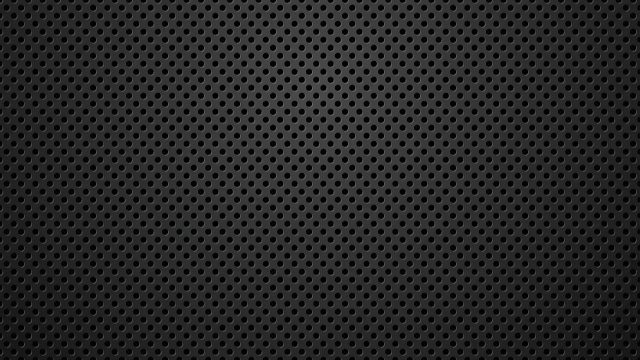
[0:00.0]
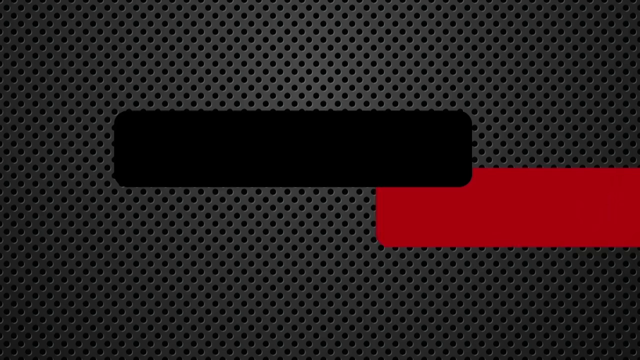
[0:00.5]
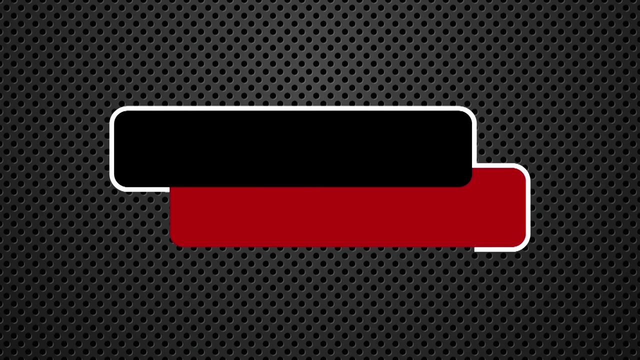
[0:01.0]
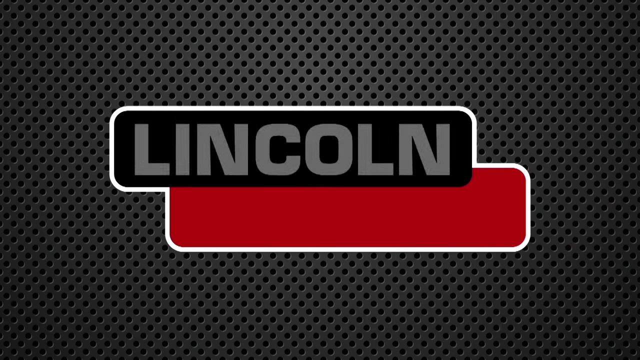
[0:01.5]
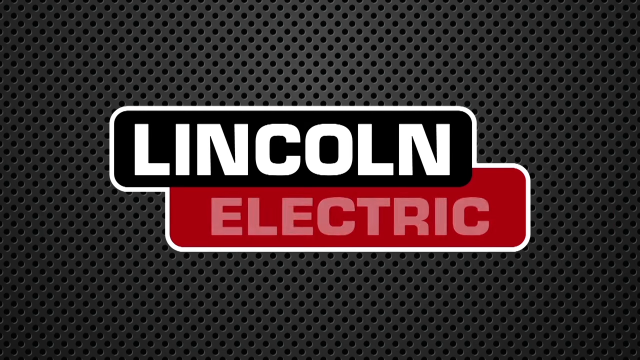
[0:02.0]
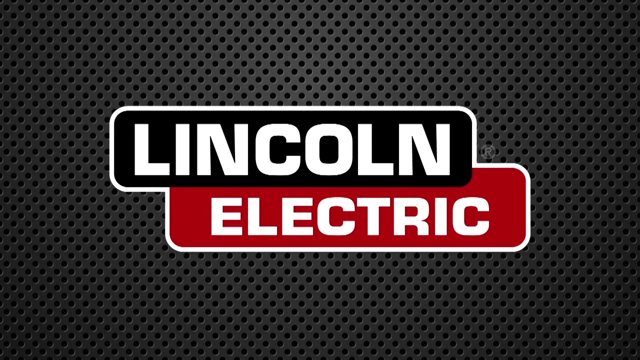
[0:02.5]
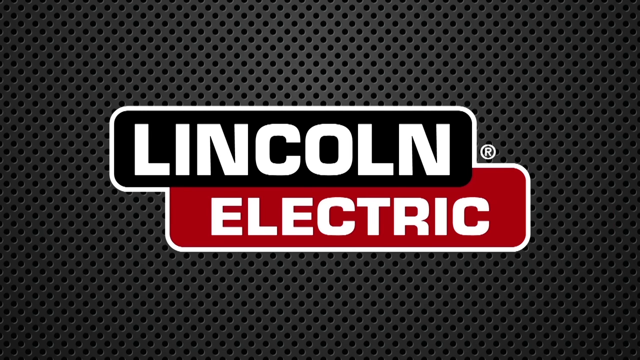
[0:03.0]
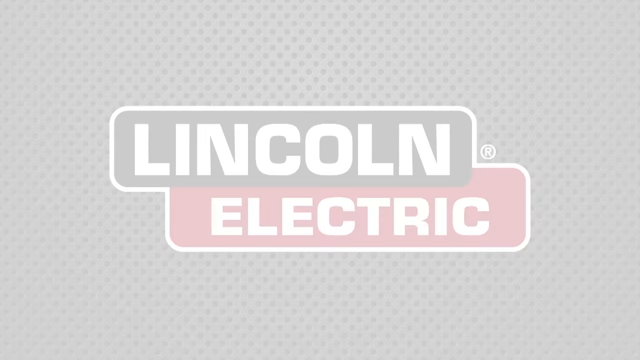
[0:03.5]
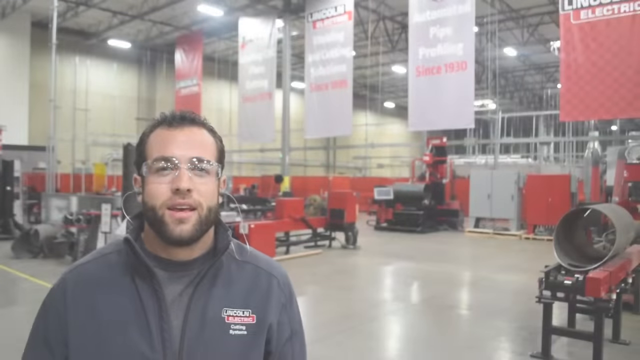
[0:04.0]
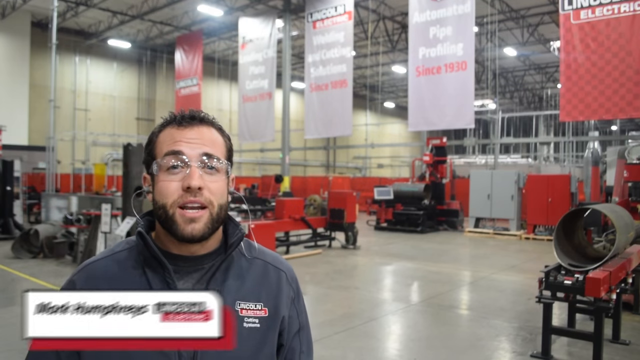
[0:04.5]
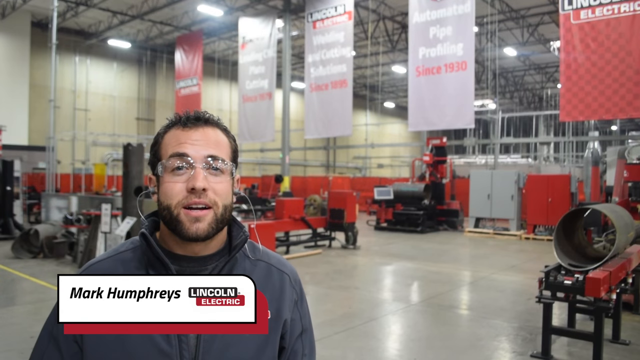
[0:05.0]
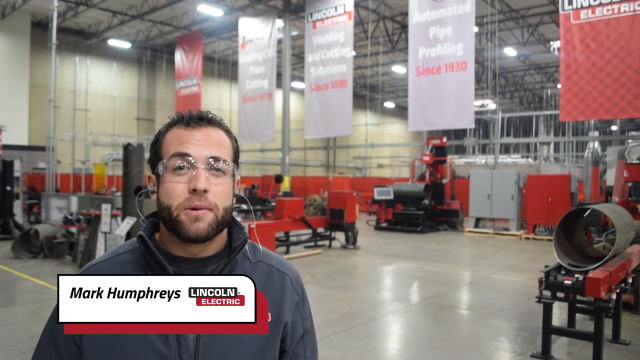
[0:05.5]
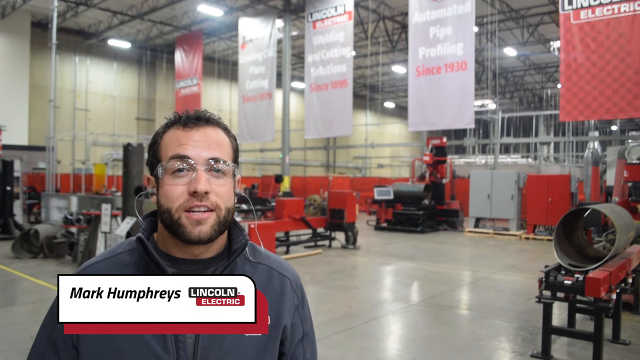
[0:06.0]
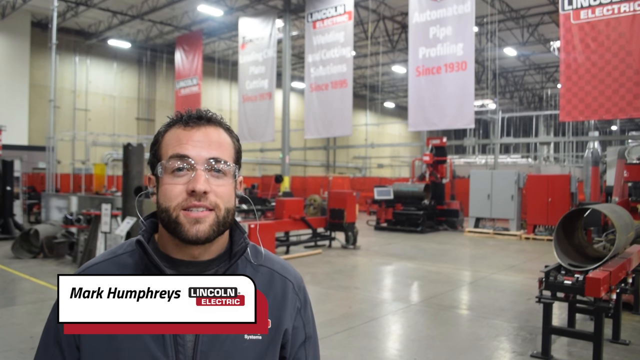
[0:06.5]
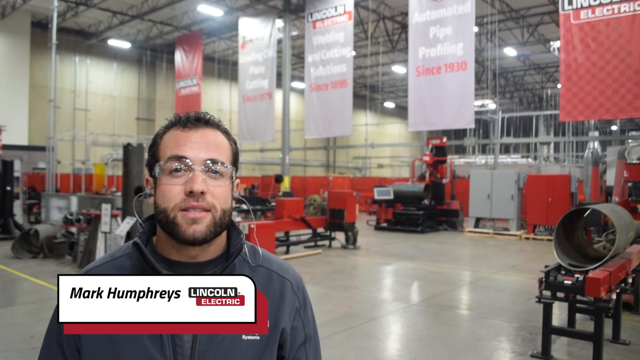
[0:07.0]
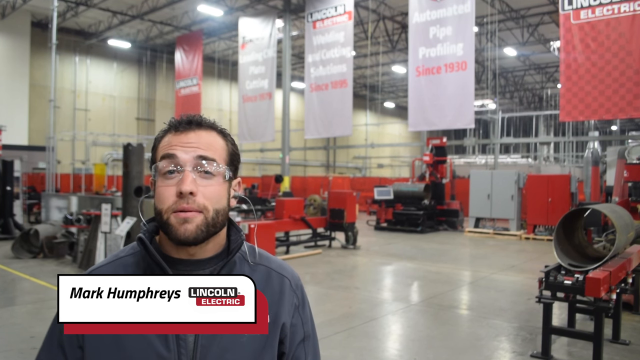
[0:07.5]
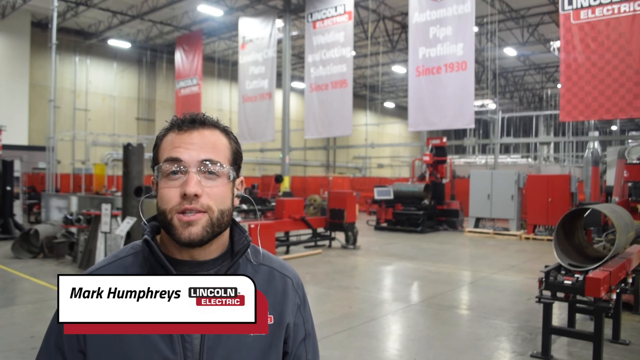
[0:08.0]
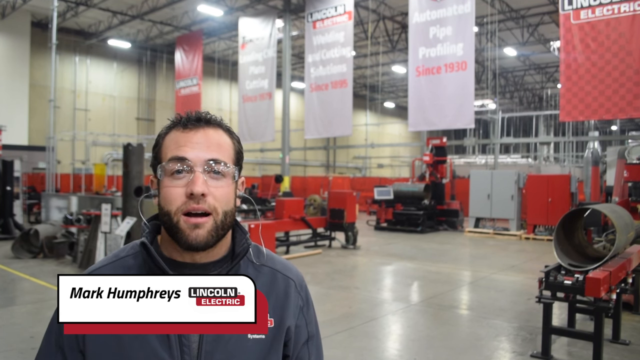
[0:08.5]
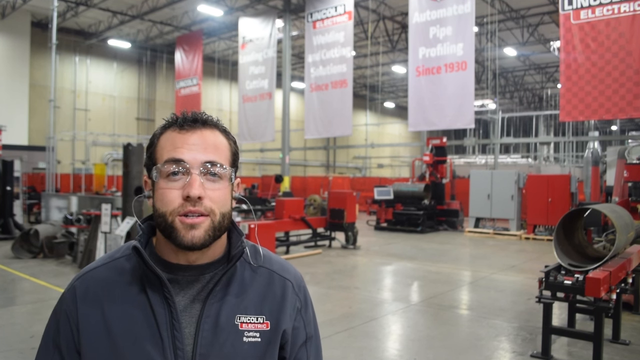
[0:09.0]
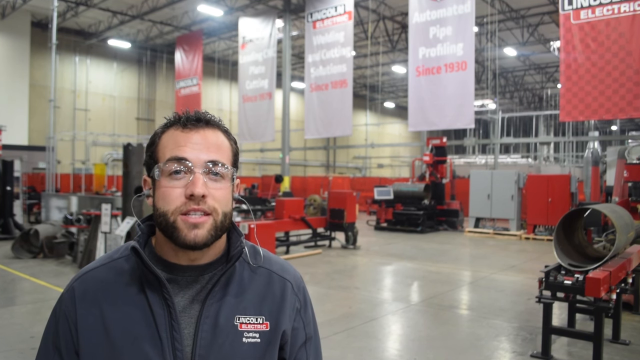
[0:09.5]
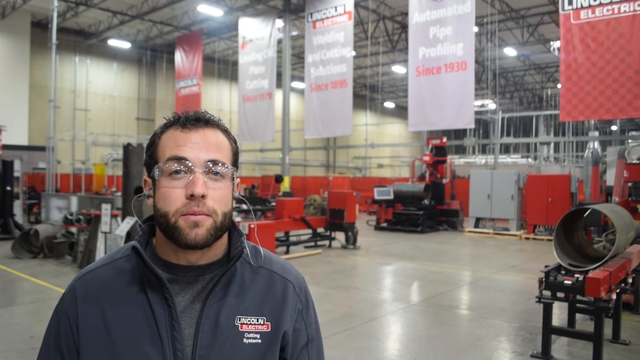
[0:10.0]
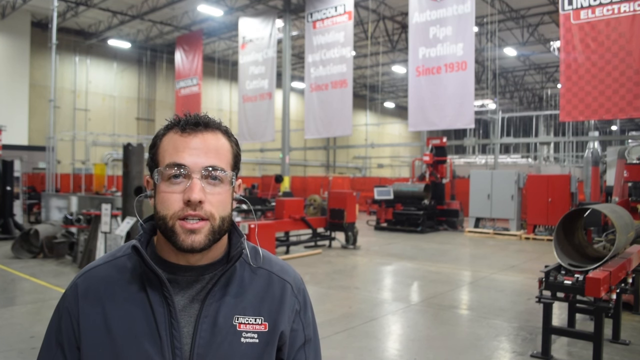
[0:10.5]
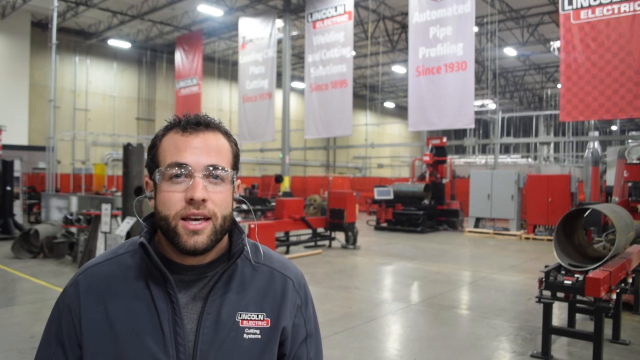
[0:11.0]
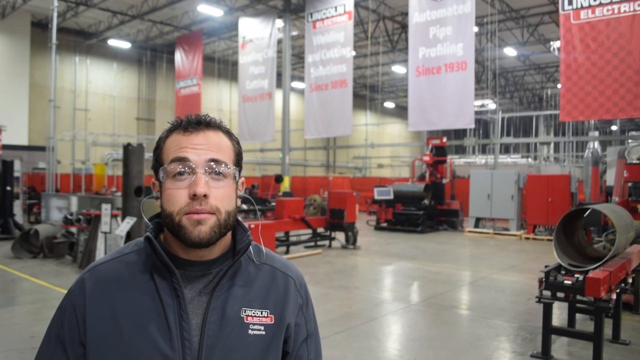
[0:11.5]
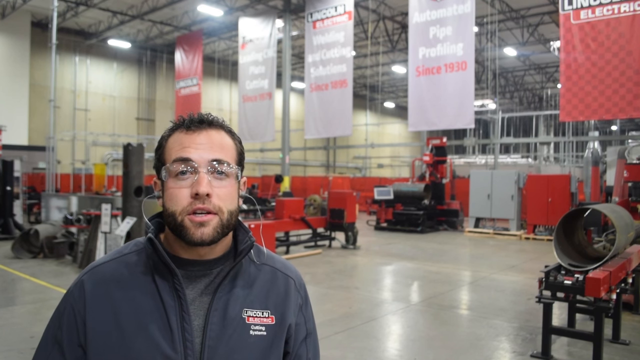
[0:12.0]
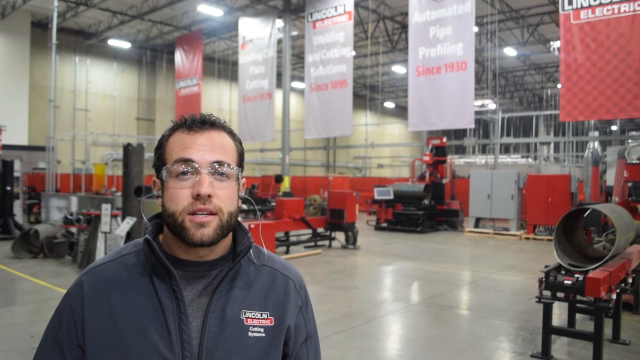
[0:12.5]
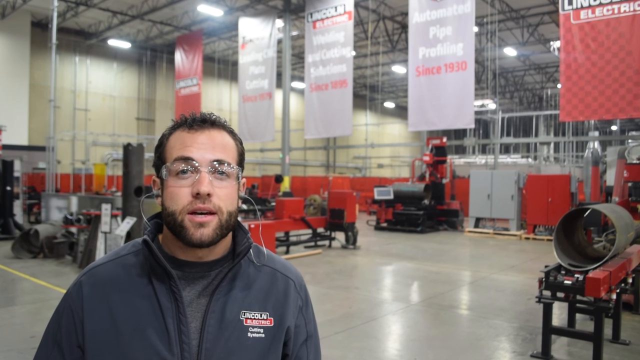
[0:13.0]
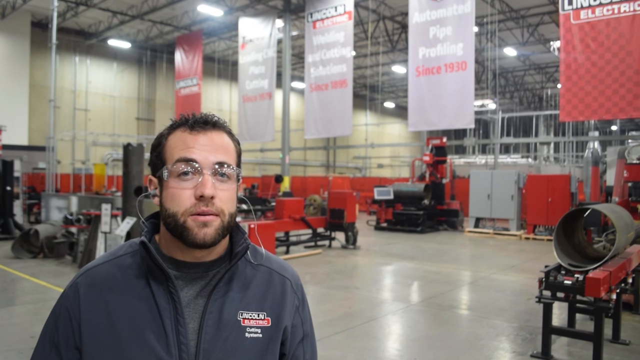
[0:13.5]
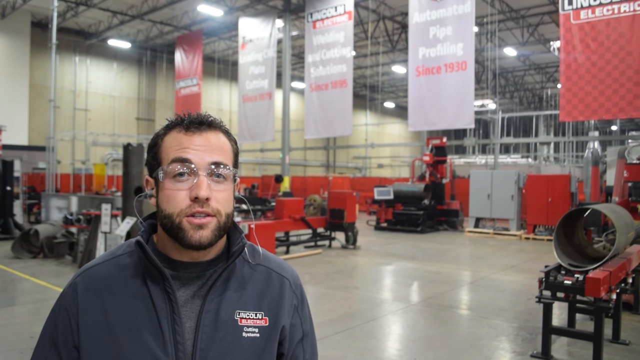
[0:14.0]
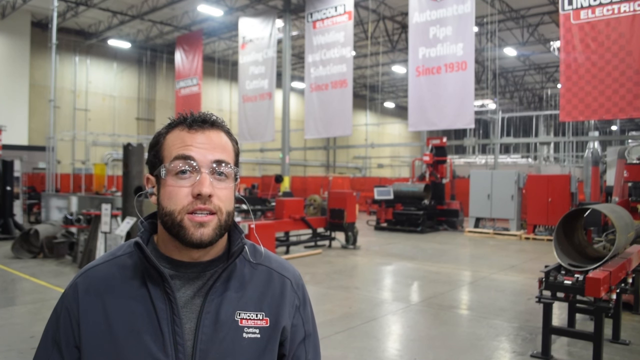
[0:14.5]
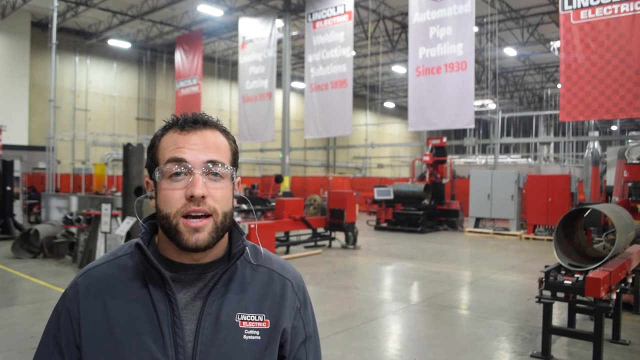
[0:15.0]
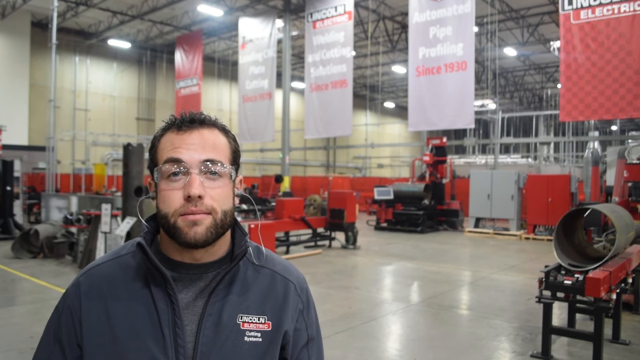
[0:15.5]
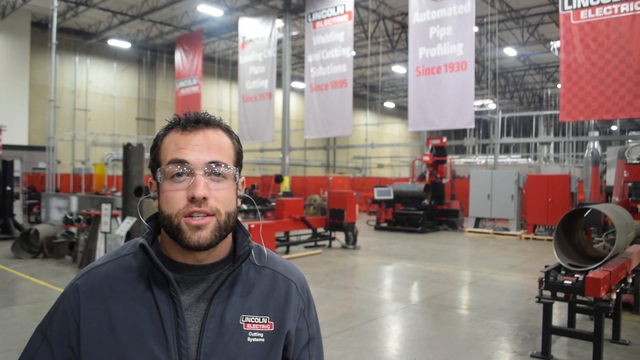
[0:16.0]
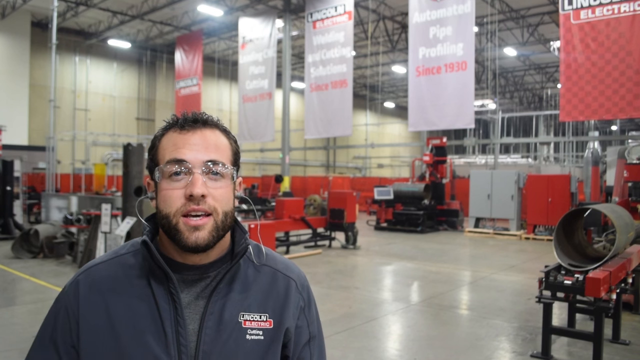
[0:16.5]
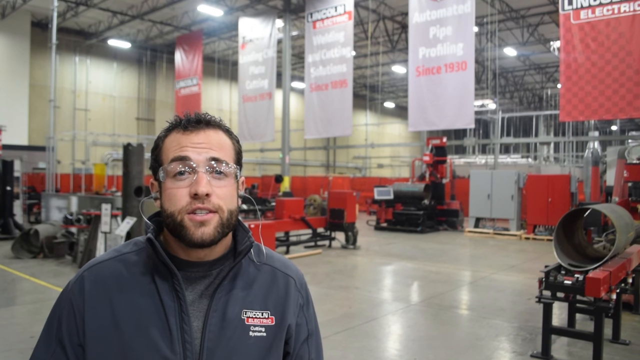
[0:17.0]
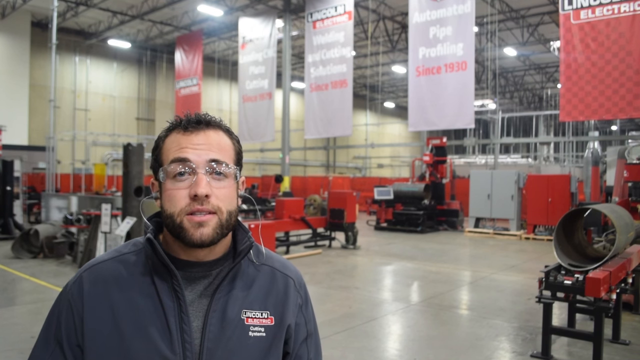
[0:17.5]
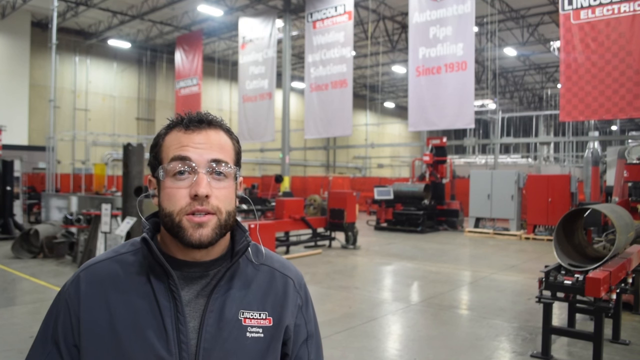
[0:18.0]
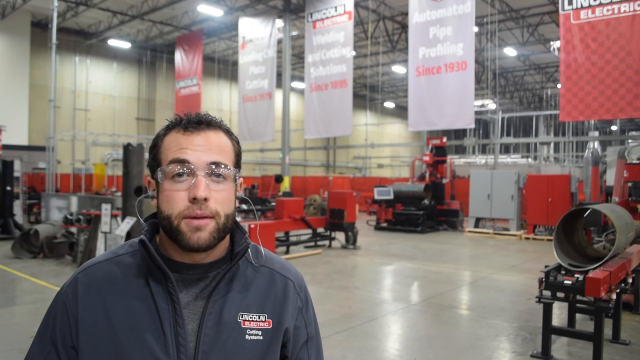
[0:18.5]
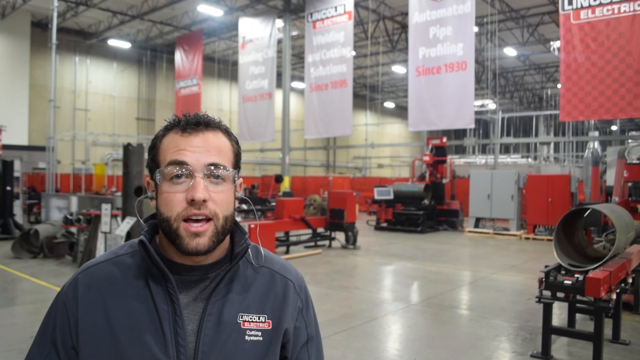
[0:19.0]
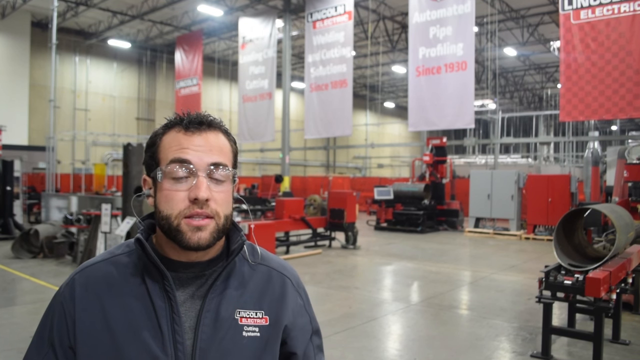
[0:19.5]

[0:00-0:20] Mark Humphries, a bearded middle-aged man, puts on a sweatshirt with "Lincoln Electric" on it and puts on transparent glasses. He is talking. The Lincoln Electric logo is visible, with "Lincoln" in black and "Electric" in red. The background shows different kinds of machines and an engine, and "since 1930" is visible behind him. He is the only person visible. At the back are digital banners: one in red, three in the middle in white, and another in red. There are machines in red, another machine in gray and another in black. The place looks like a huge warehouse.